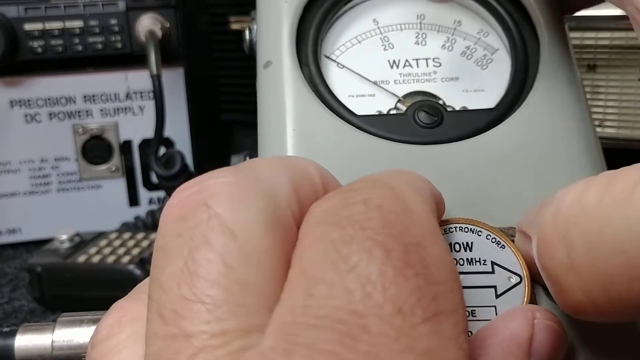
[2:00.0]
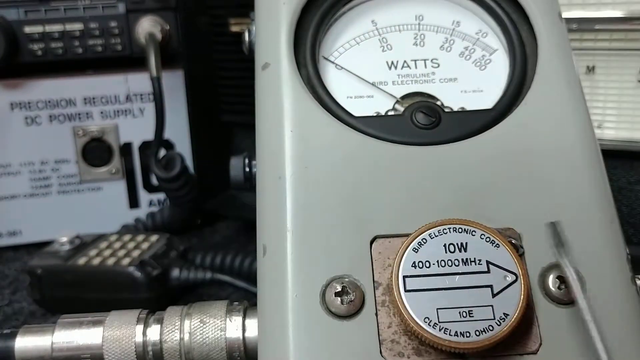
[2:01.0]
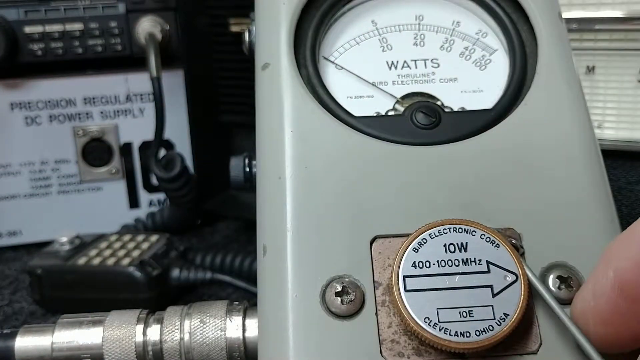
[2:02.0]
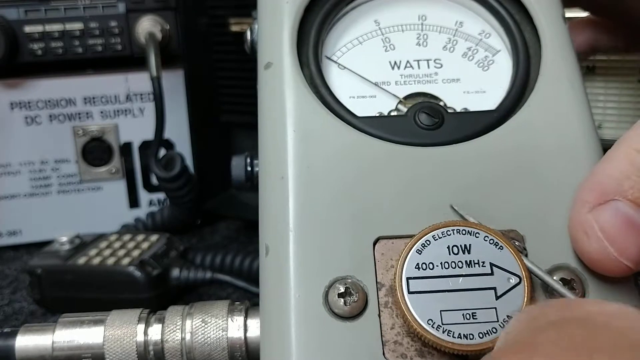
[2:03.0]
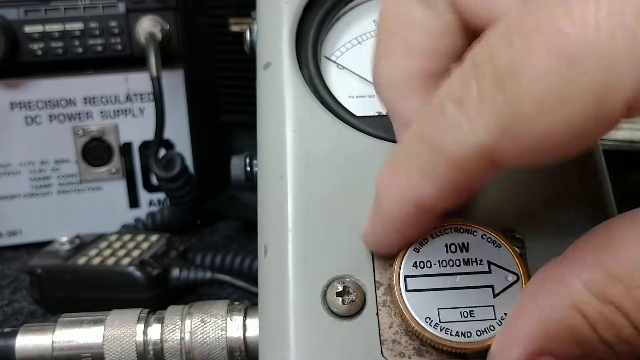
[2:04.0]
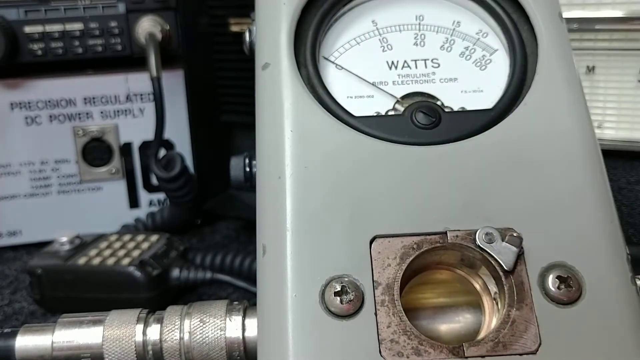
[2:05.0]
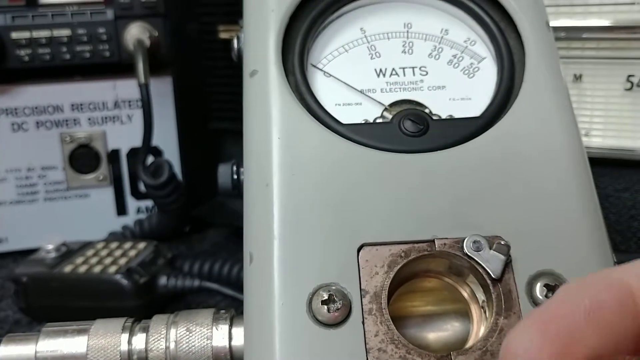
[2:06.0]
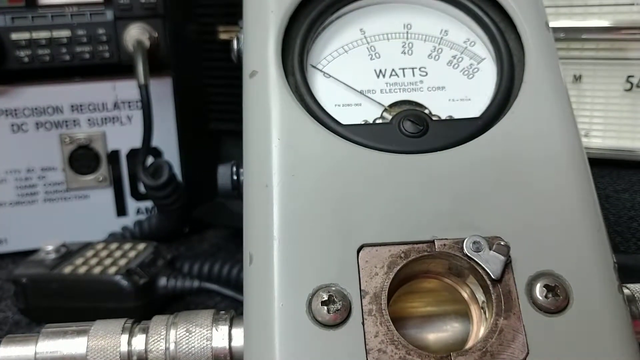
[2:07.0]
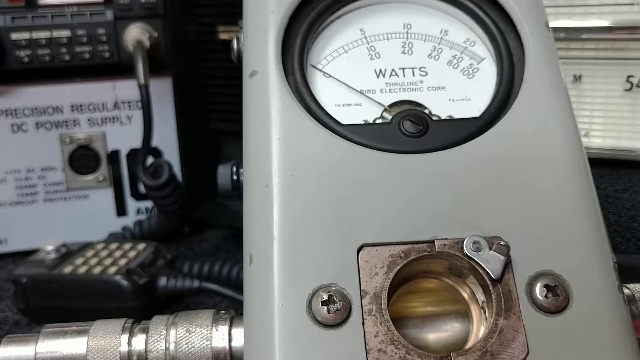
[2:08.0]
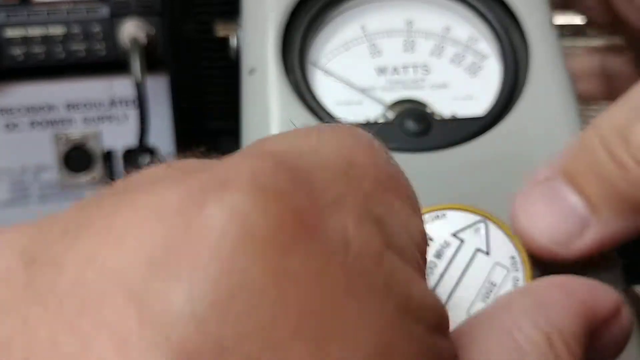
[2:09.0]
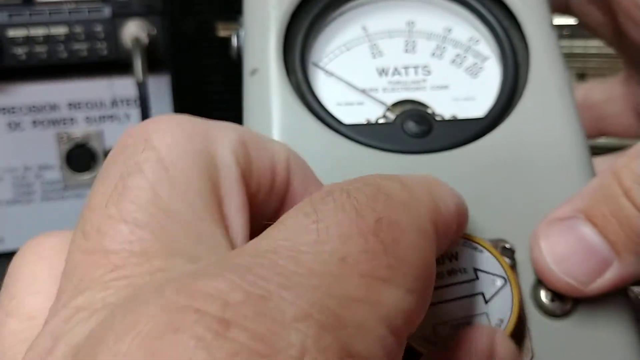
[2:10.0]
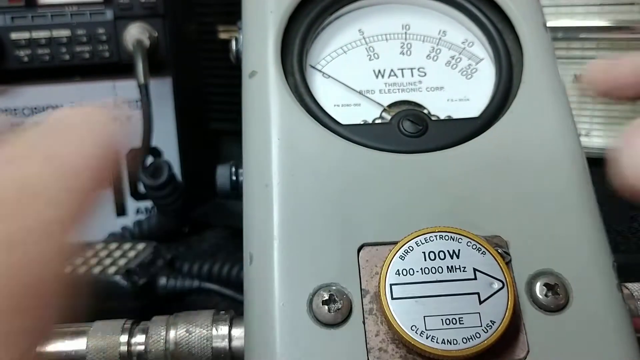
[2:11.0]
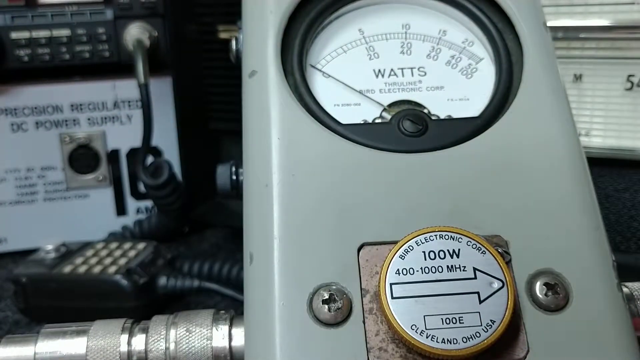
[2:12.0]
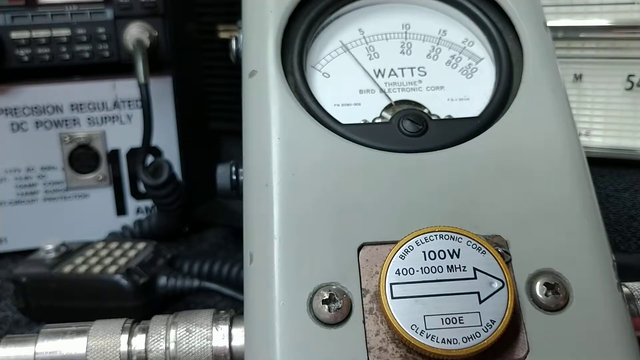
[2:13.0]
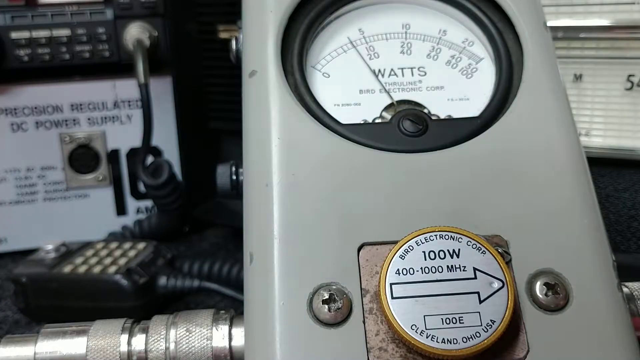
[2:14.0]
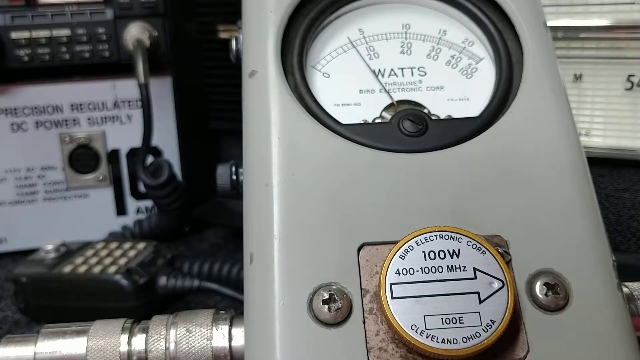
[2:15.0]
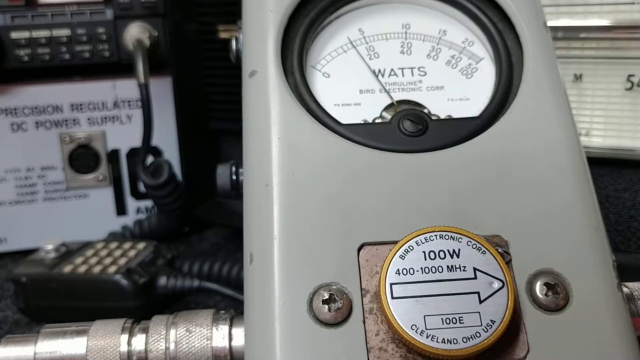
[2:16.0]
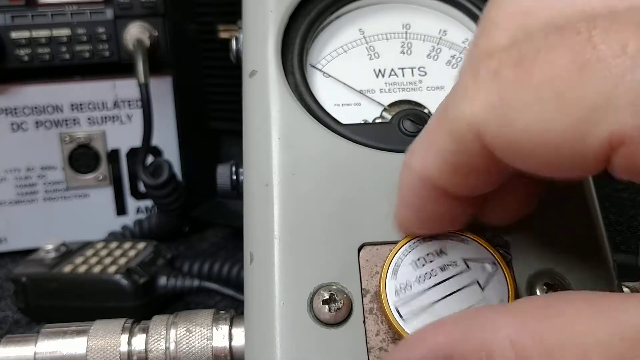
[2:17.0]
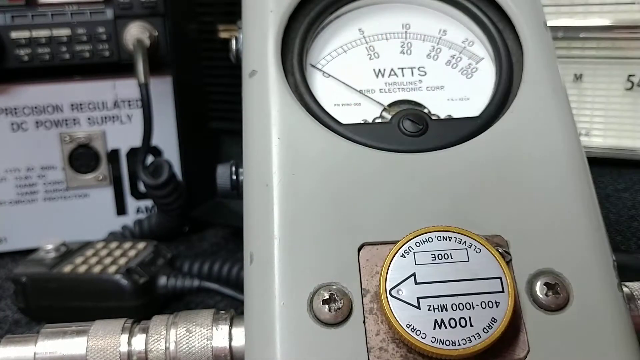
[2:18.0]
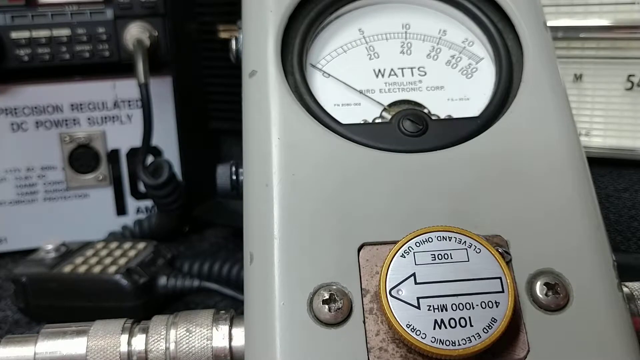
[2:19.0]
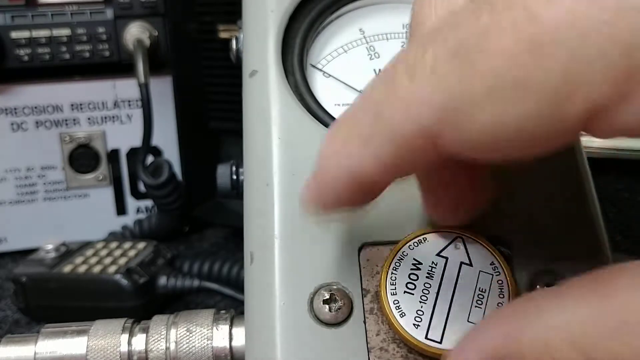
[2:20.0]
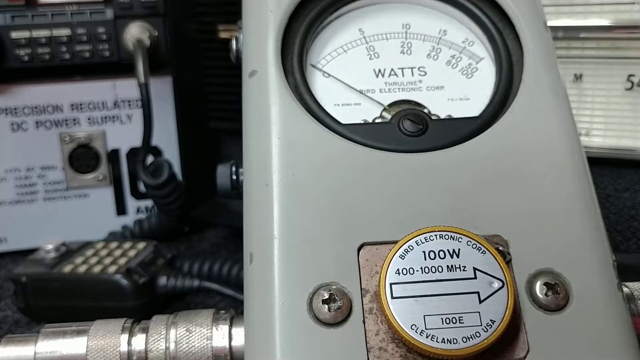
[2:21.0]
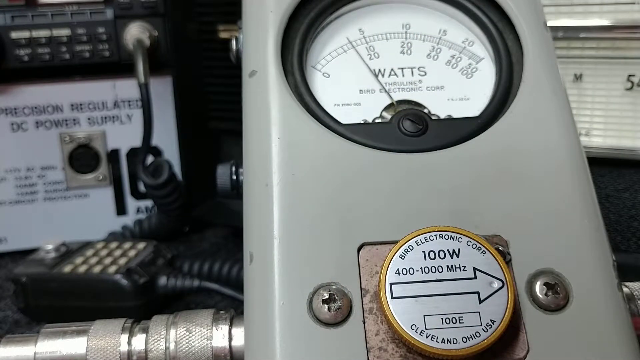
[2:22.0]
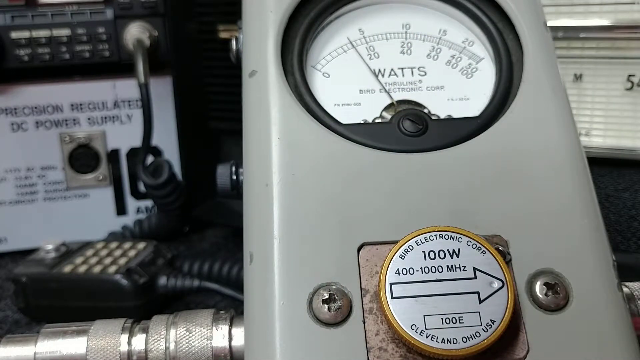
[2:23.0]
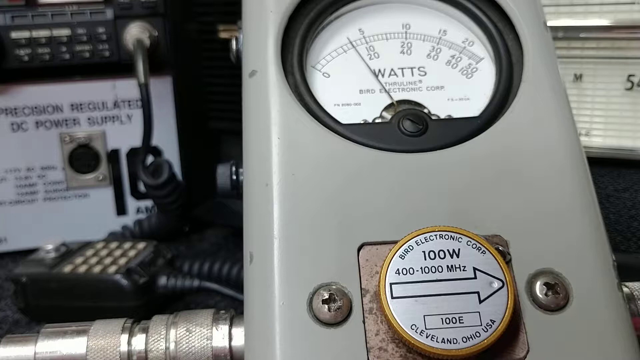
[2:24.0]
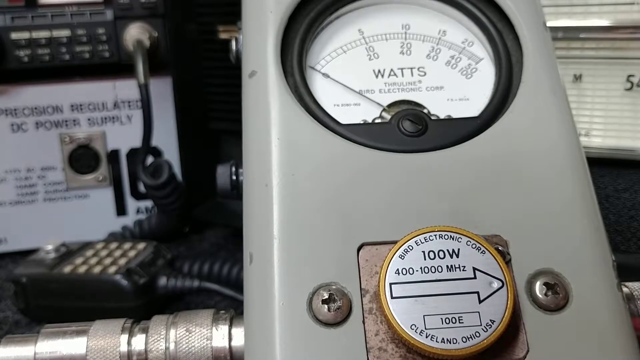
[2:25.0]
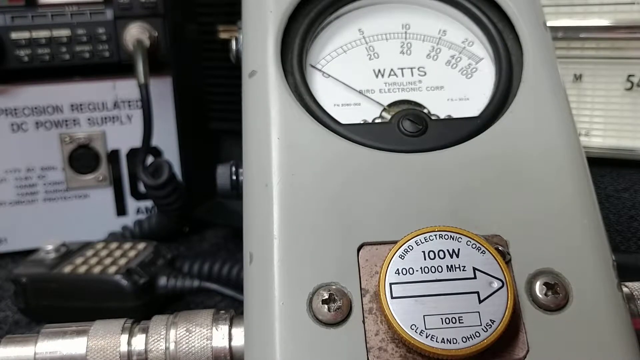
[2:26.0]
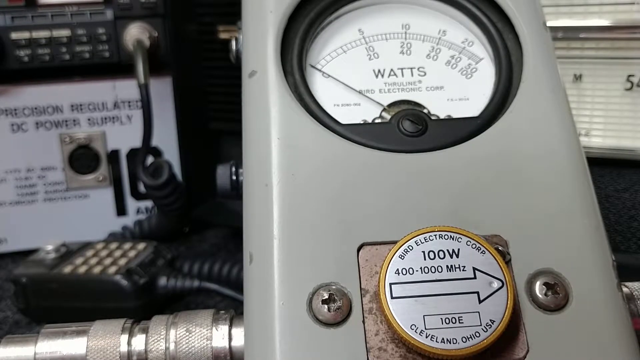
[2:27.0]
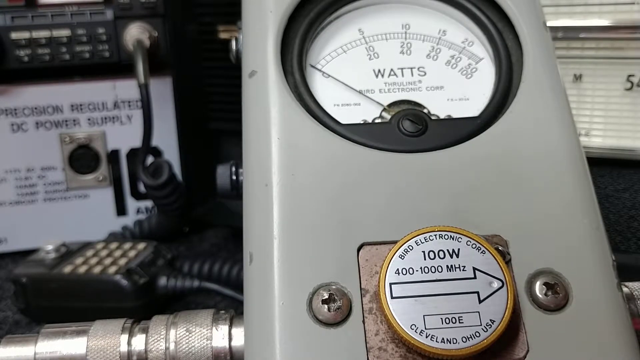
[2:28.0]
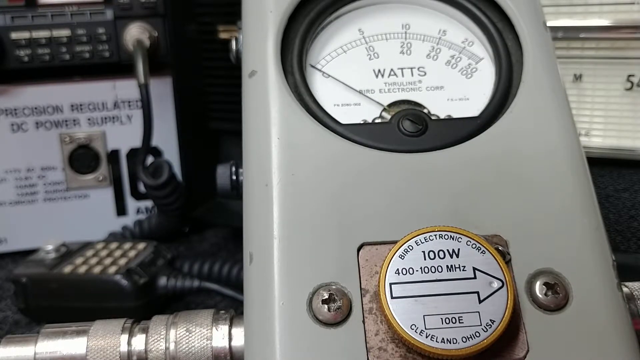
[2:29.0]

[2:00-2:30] A person seems to be attaching an object to a meter. The meter has a needle and says "watts", with a scale going from zero up to 100. The meter itself is made of metal and is an off-green color. The object they seem to be attaching has a silver top with gold wrapped around it and says "10 watts" on it. They also have what looks like a screwdriver and seem to be trying to pry the object out of the meter, first with their hands and then with the screwdriver. They pull the object out with their right hand, revealing a hole where the object used to be, which seems to have metal that looks gold. They then replace it with another object that also looks like a cylinder, says "10 watts" and has a gray top with gold trim.